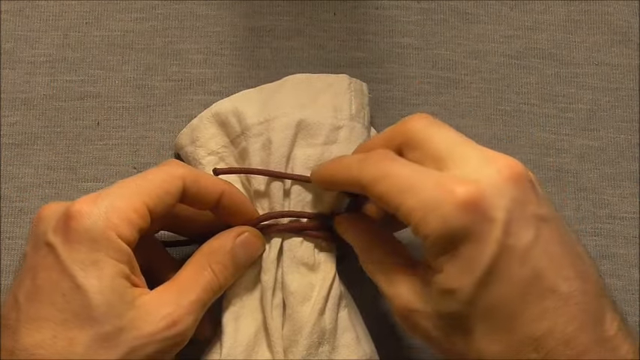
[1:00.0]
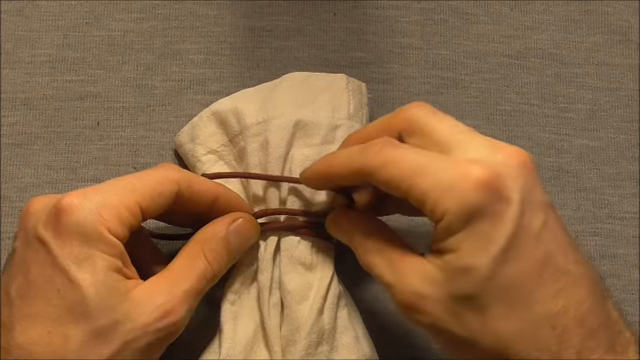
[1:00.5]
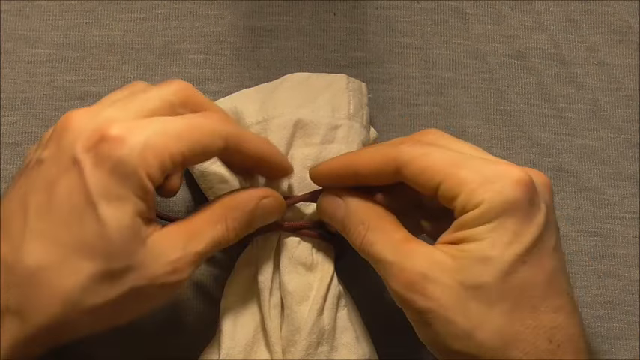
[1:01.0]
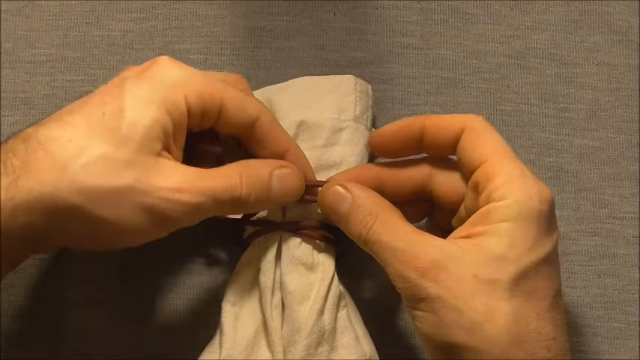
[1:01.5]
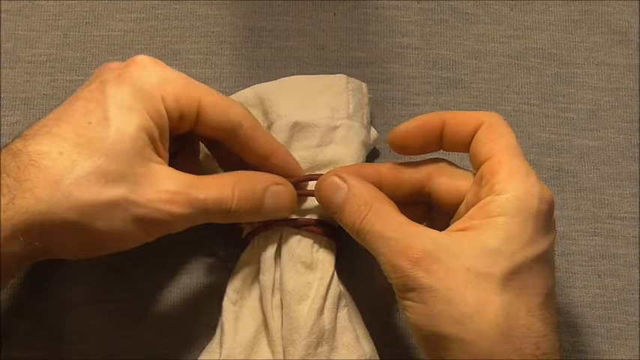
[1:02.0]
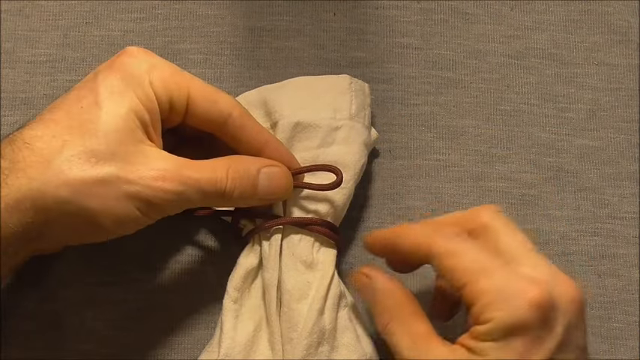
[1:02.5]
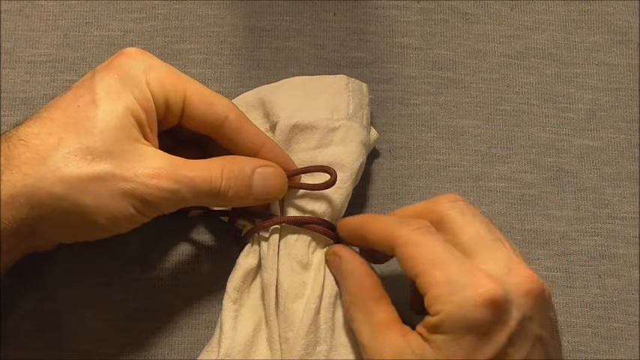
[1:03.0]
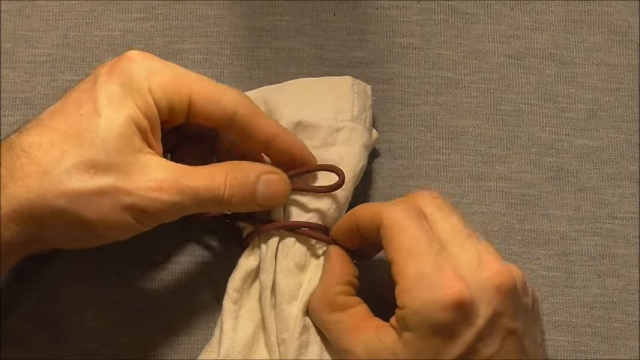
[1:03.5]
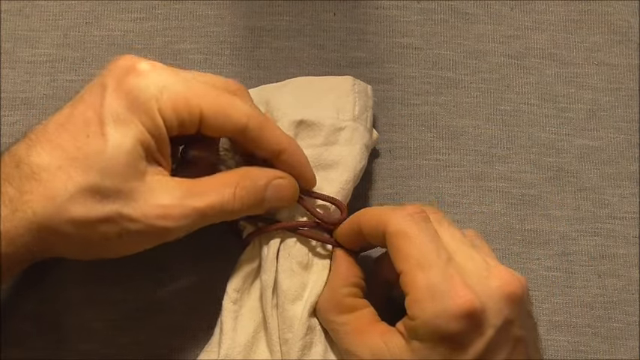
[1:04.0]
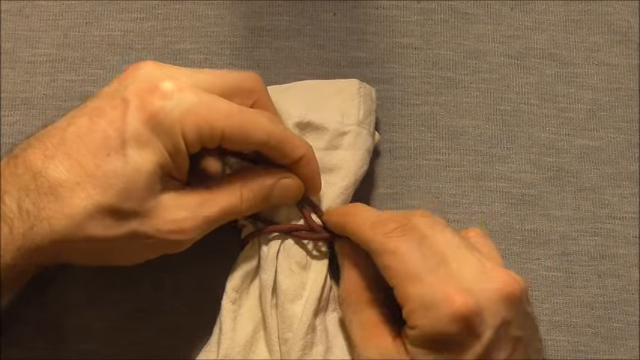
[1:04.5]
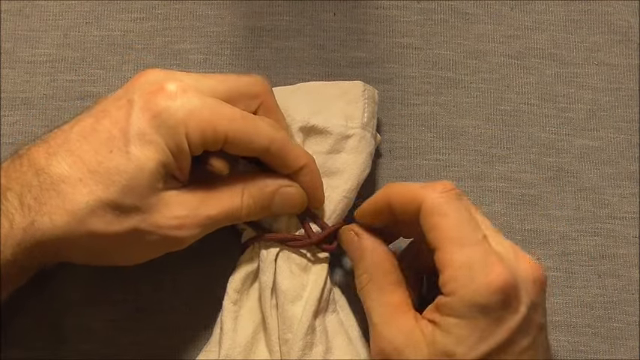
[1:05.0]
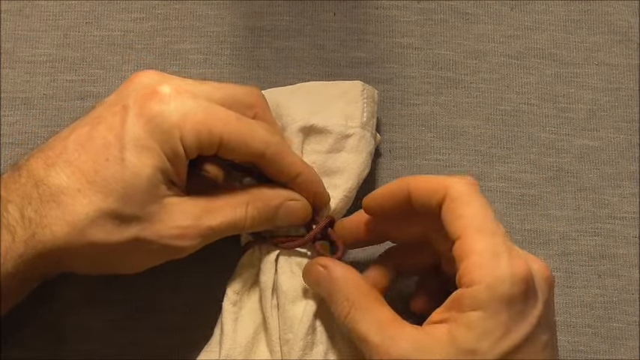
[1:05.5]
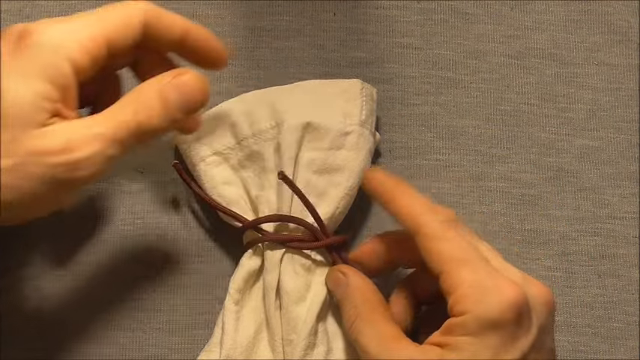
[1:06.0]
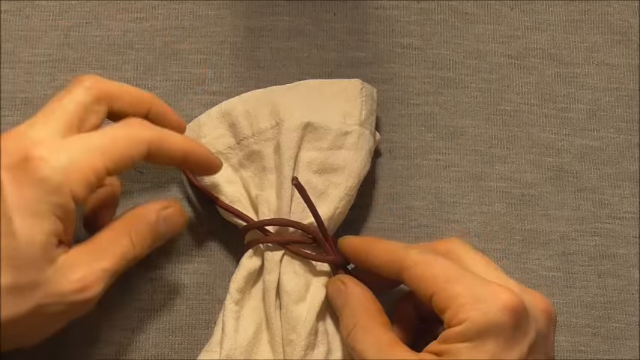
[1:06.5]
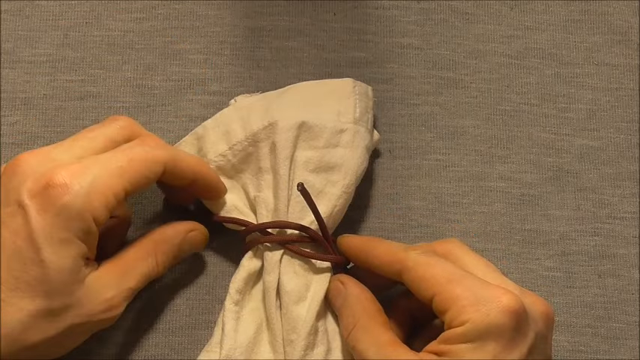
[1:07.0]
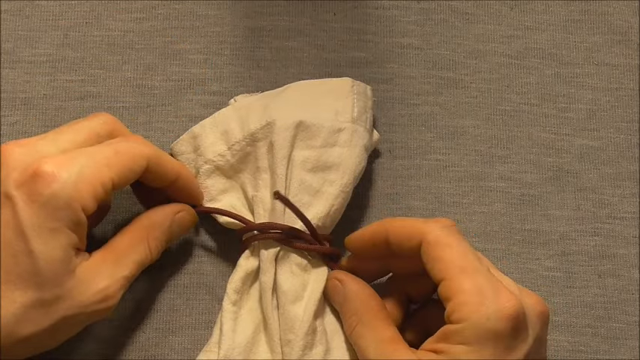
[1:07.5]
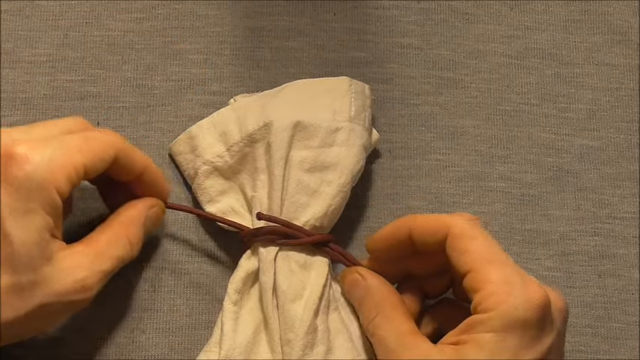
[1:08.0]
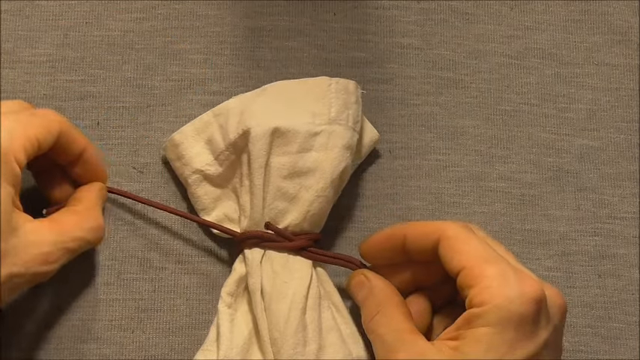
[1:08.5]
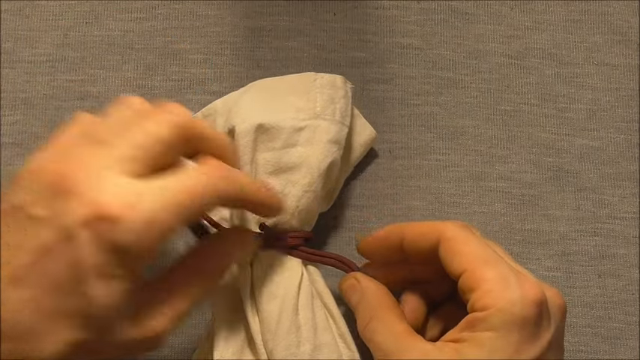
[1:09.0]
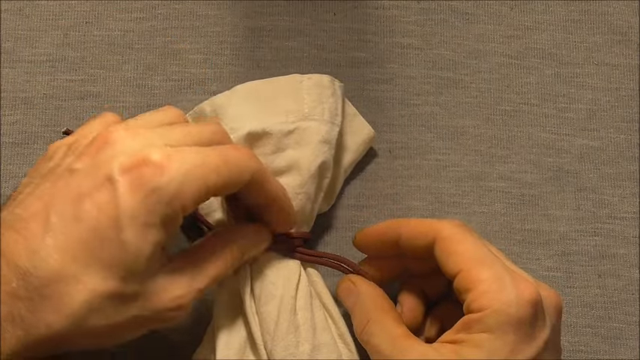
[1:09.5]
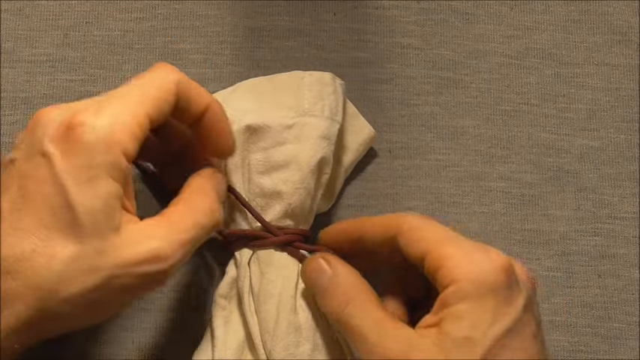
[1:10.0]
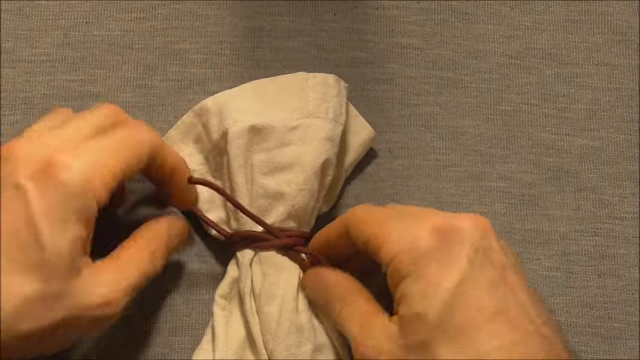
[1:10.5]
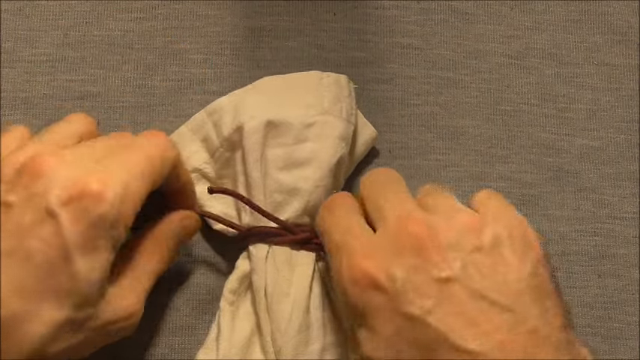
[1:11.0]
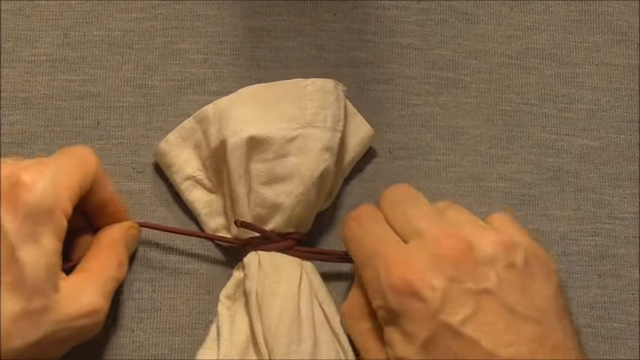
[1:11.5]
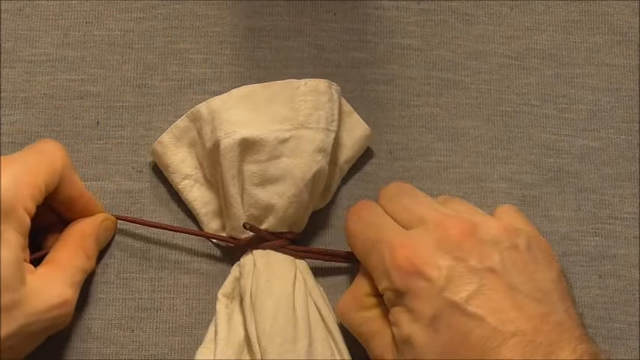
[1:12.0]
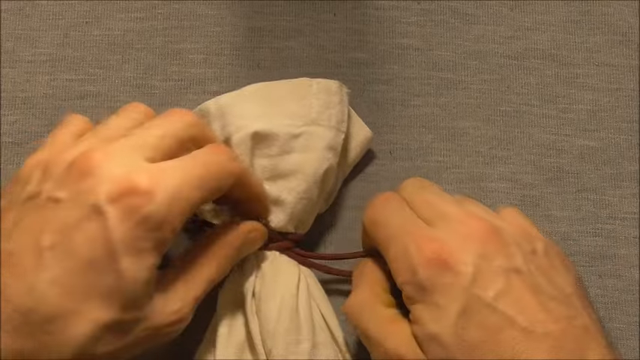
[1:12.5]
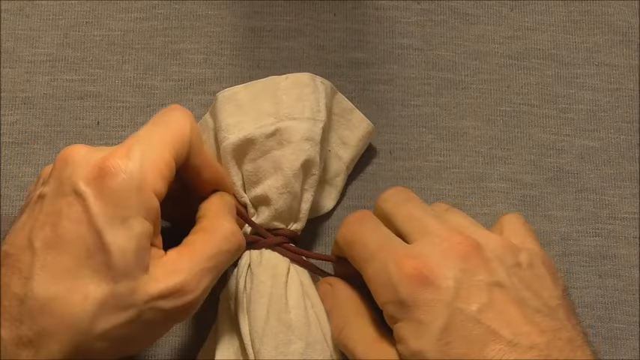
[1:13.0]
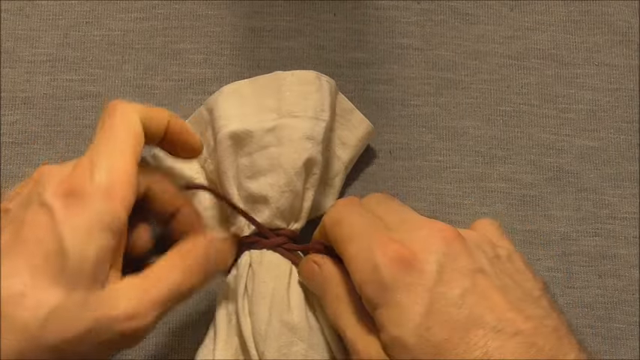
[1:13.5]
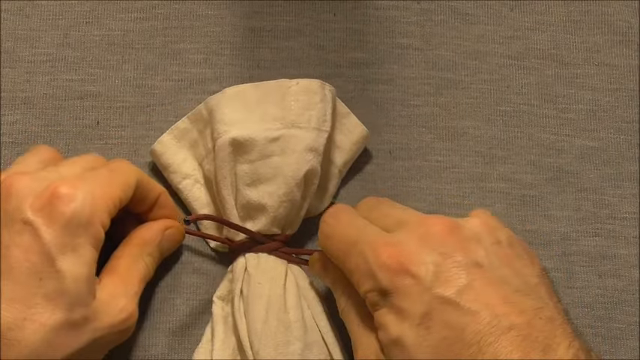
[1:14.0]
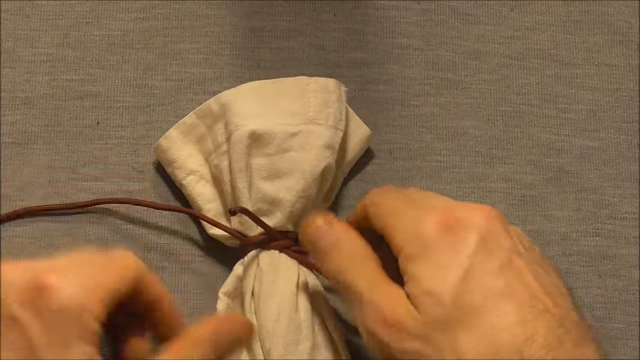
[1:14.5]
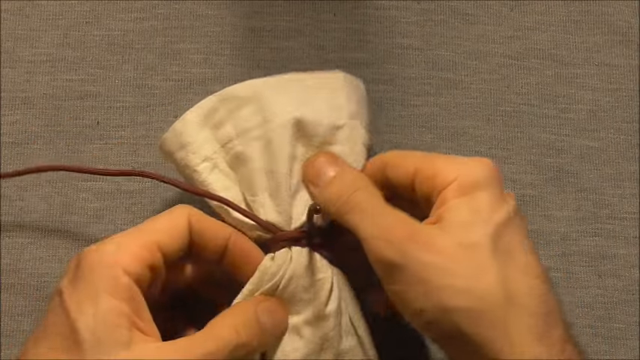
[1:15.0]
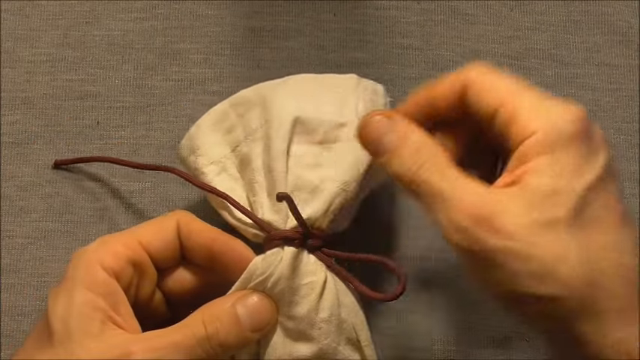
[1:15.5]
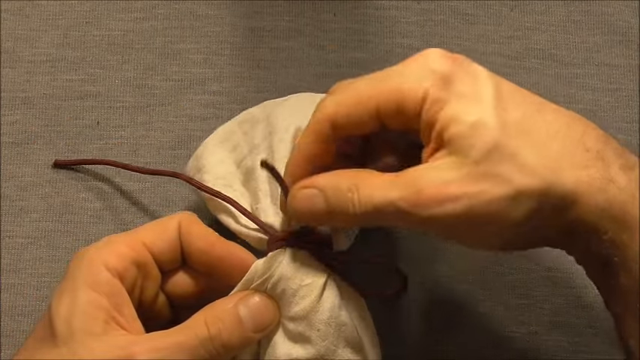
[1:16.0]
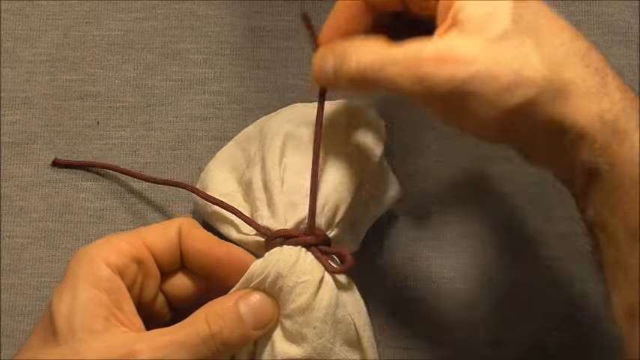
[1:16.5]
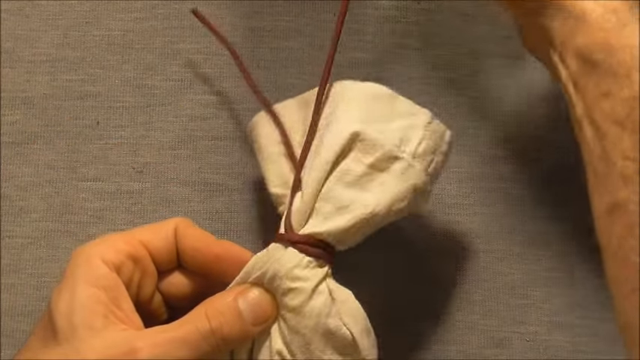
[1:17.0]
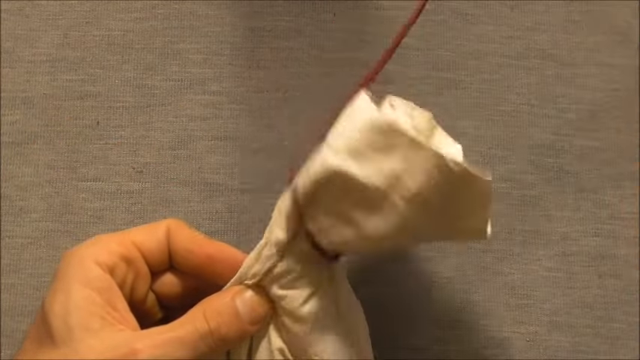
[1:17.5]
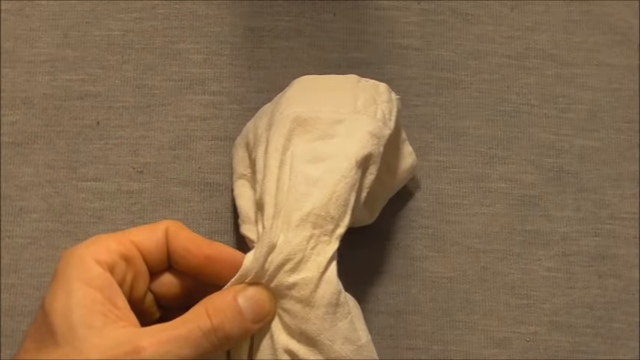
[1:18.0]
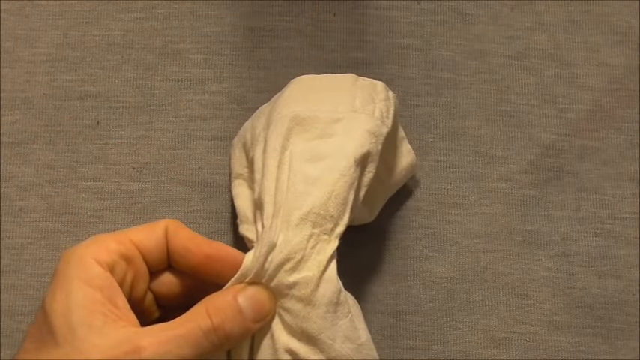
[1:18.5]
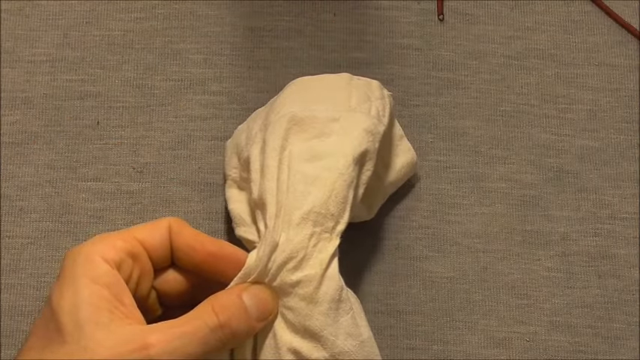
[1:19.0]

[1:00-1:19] Against a dark gray background, two hands, apparently of a light-skinned male, hold a brown string that looks like leather, tying a knot around a piece of beige cloth. The knot looks like the bunny ears used when learning to tie shoes. He puts the bunny-ear shape between the string and adjusts it, then fastens the string, apparently as tightly as he can, and fastens it a little more. With two ends of the string left, he takes the shorter end and pulls it up, and the knot completely gives way and comes undone.